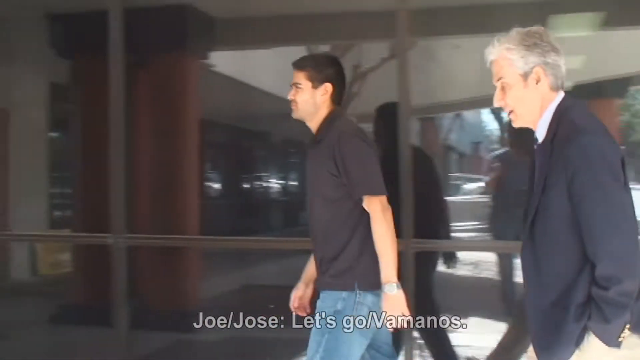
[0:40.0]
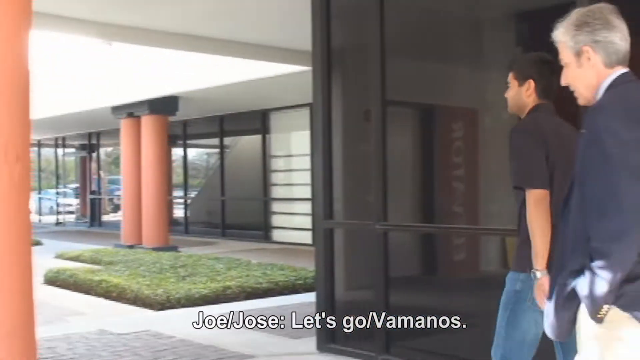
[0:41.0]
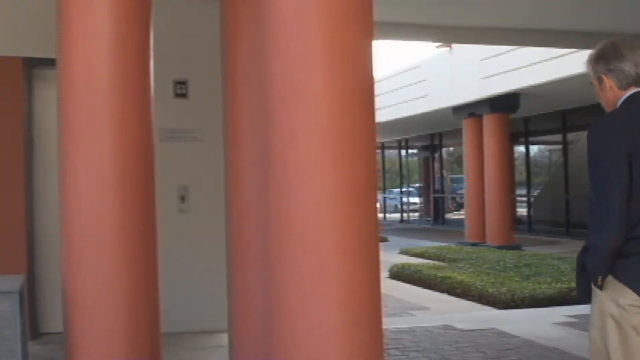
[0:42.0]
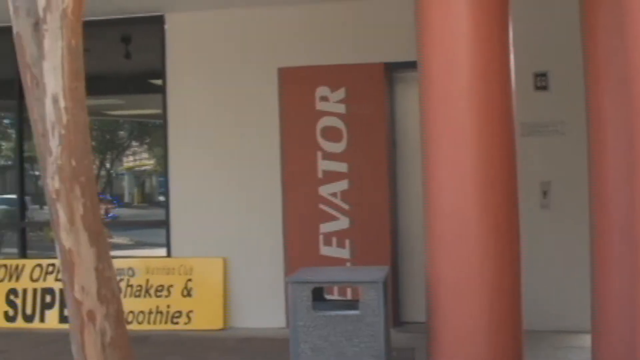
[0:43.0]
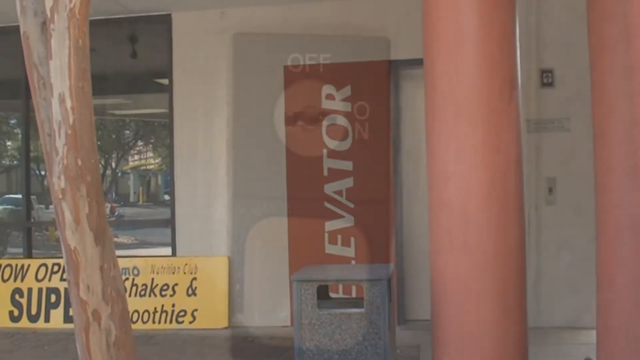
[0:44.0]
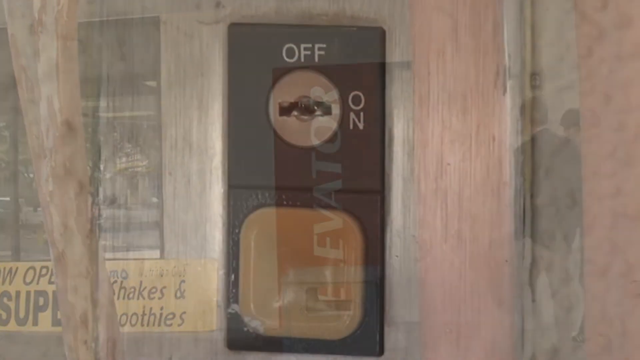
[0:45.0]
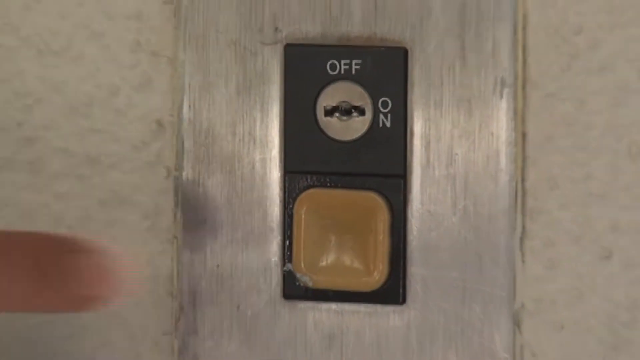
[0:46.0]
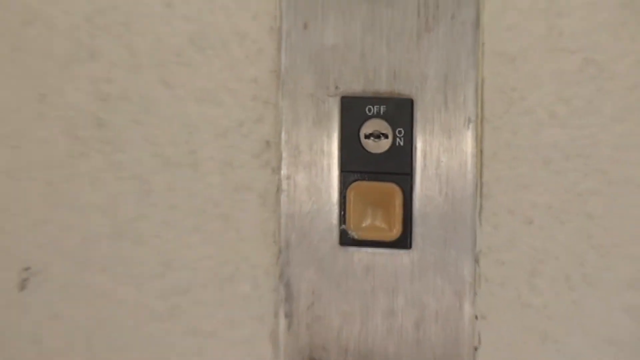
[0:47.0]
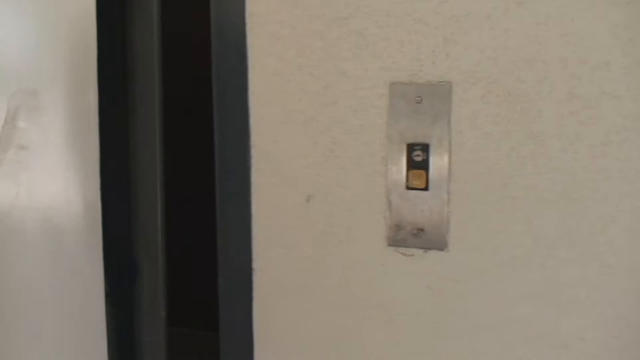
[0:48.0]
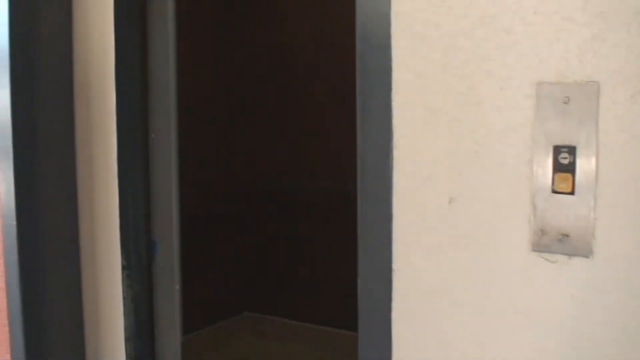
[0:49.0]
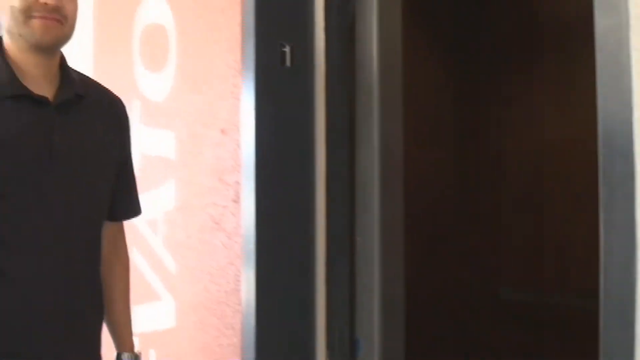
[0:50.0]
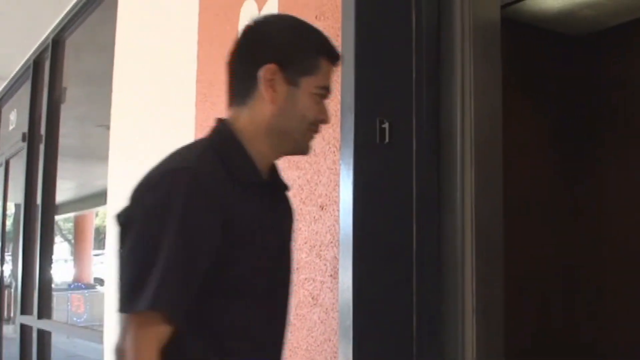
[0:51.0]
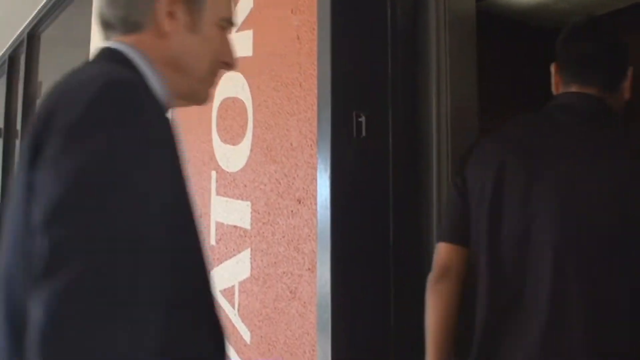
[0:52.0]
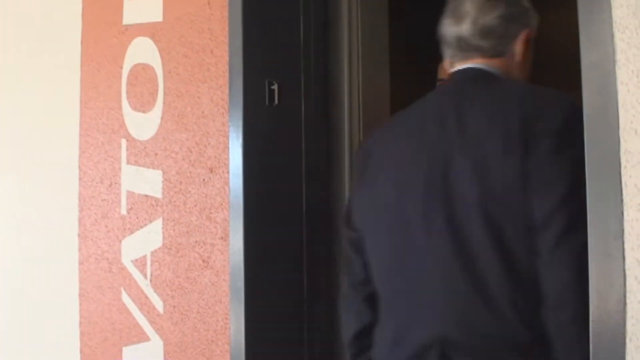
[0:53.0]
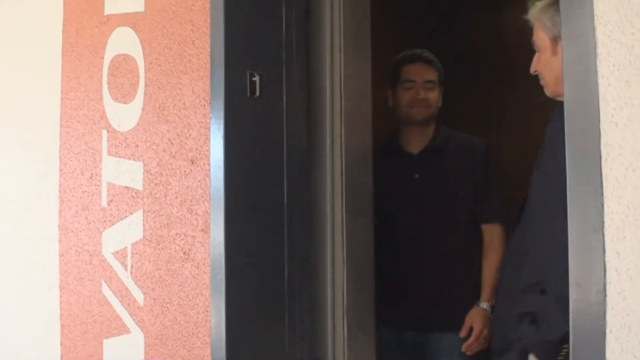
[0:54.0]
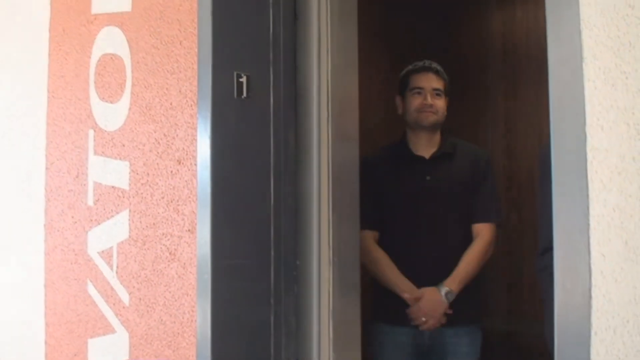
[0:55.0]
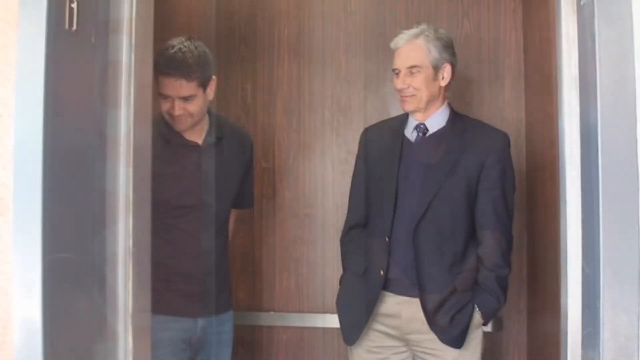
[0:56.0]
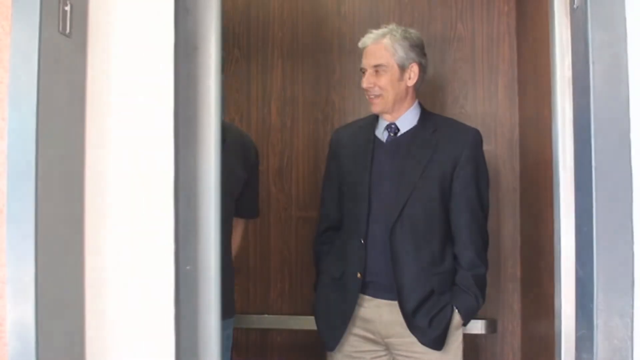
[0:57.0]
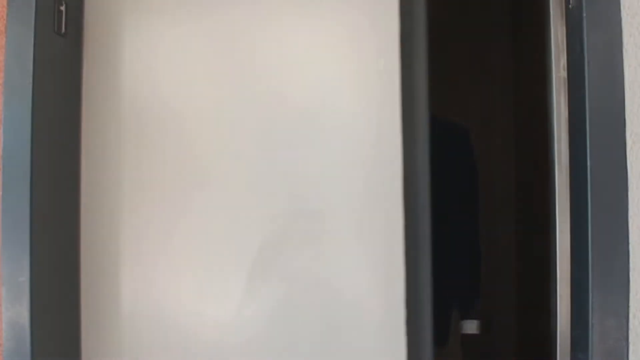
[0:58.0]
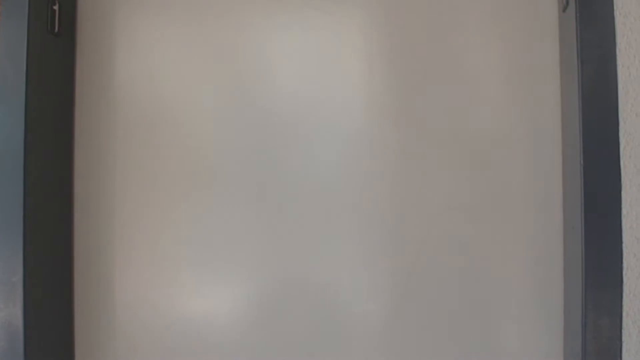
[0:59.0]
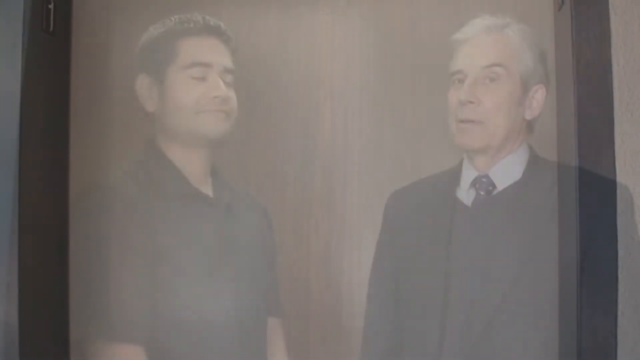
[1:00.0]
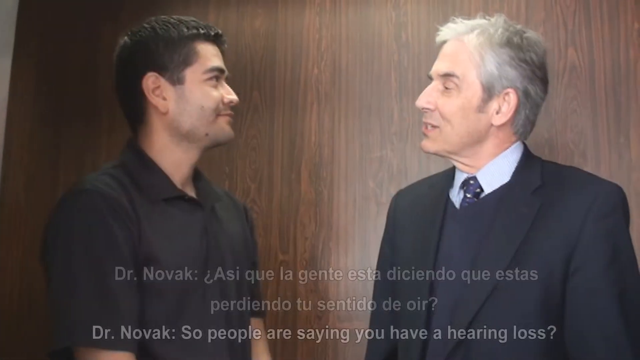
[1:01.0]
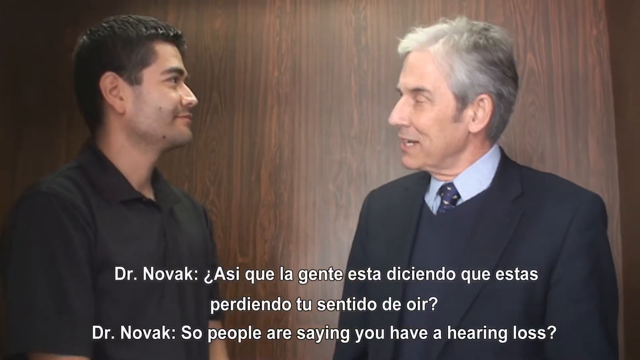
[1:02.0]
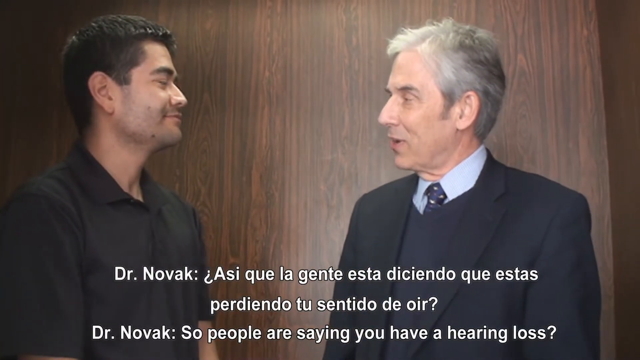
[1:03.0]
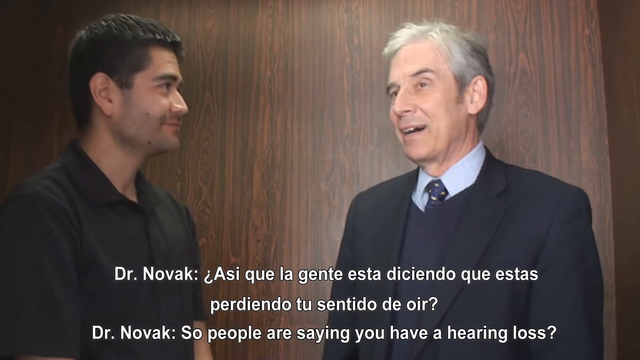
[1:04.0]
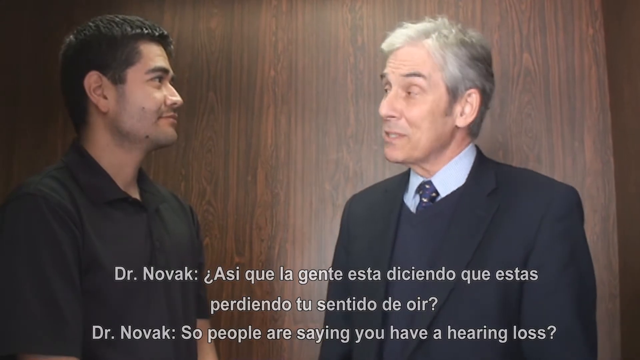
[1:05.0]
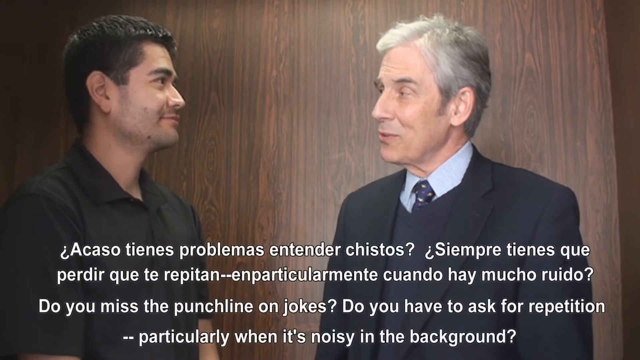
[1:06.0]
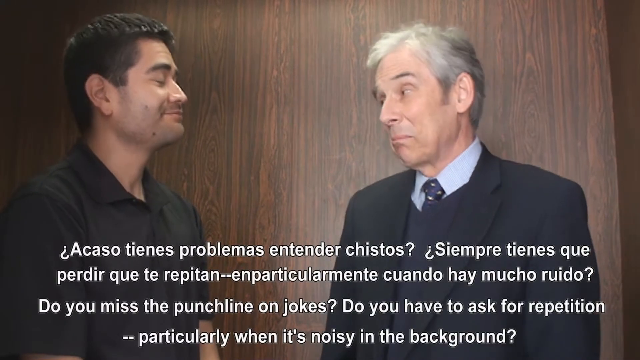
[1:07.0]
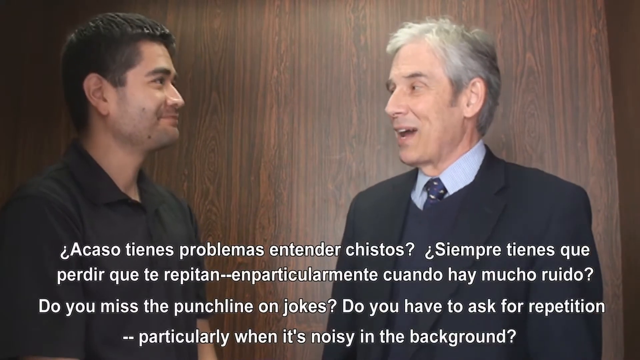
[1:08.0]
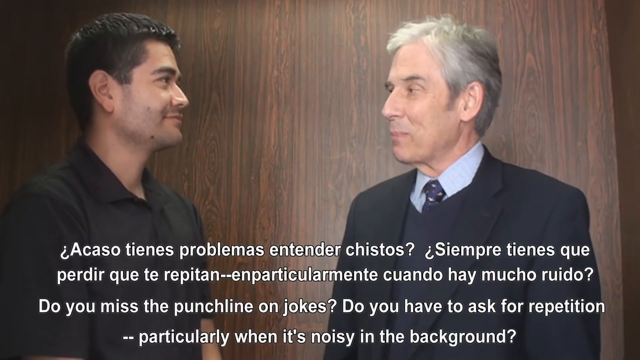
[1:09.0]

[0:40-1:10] Joe says "let's go", and the two walk past some orange columns. A shot shows text on a forest background. A man presses a down button, and the elevator opens. The two people walk into the elevator, and its doors shut. Dr. Novak says "so people are saying you have a hearing loss", then "do you miss the punchline on jokes" and "do you have to ask for a repetition particularly when it's noisy in the background". Behind them, the elevator walls are made of wood. Dr. Novak wears a suit, while the man on the left wears a normal black shirt. The doctor is an elderly man, and the man on the left is in his mid-40s.